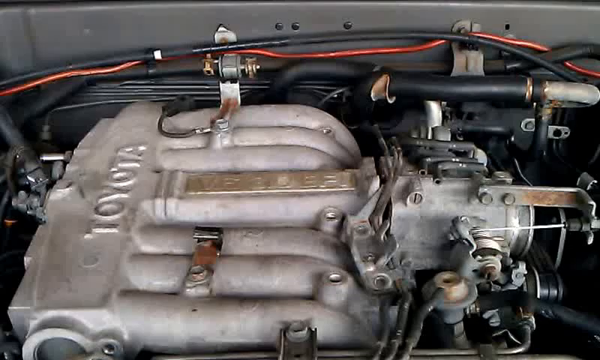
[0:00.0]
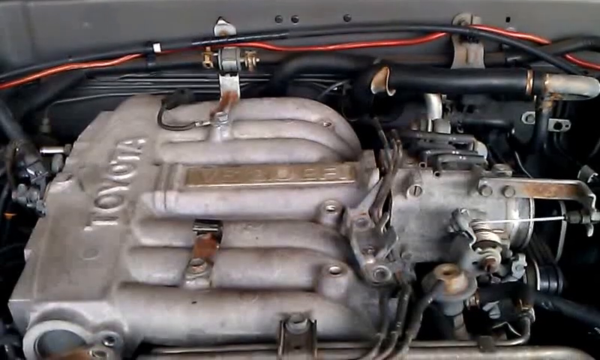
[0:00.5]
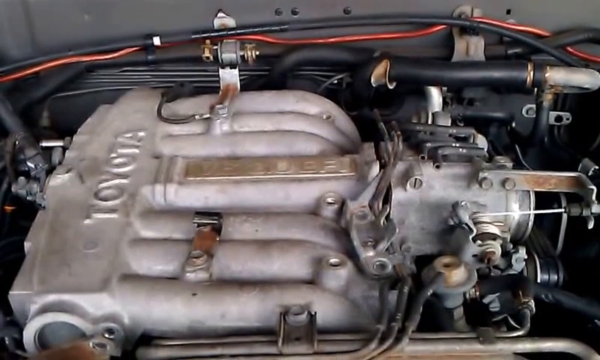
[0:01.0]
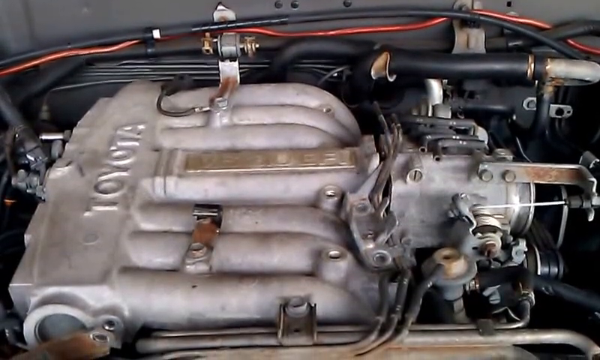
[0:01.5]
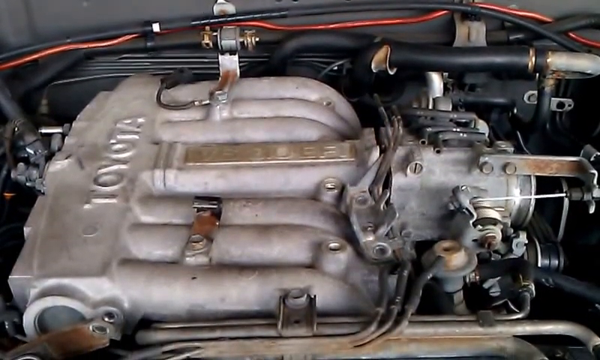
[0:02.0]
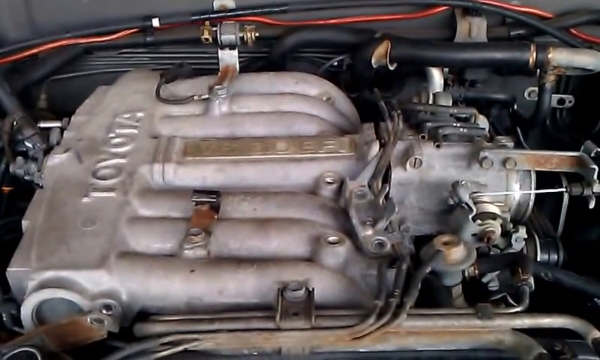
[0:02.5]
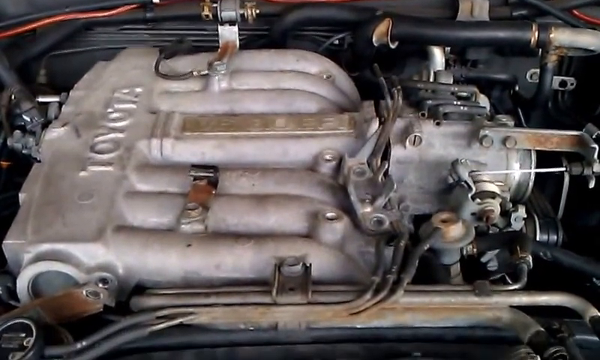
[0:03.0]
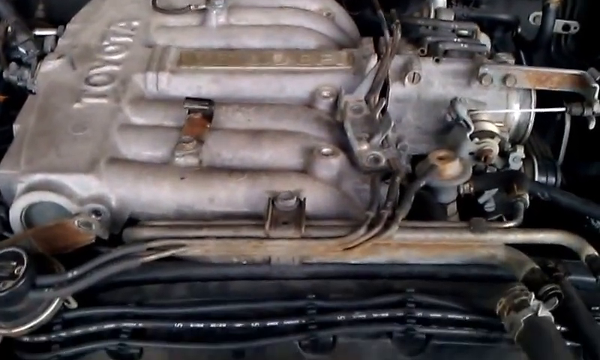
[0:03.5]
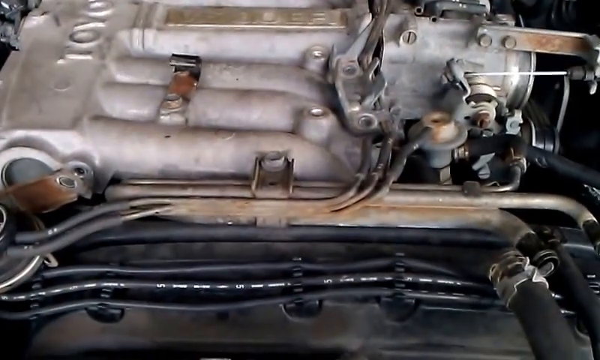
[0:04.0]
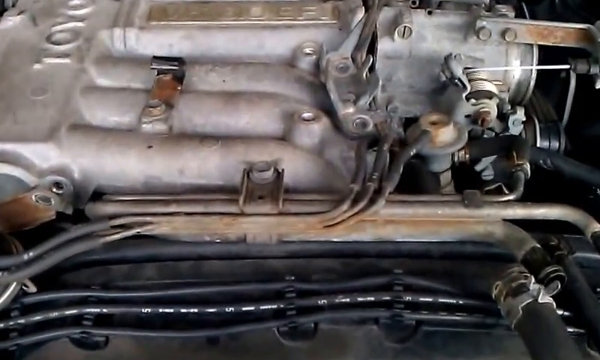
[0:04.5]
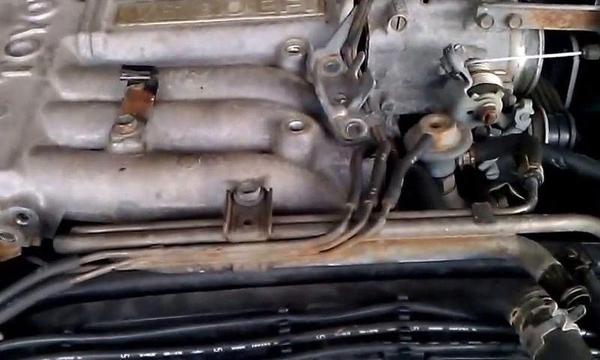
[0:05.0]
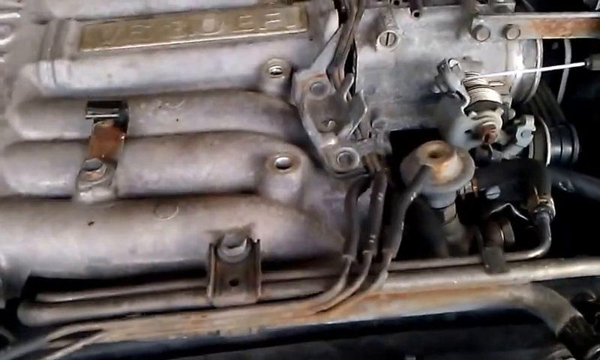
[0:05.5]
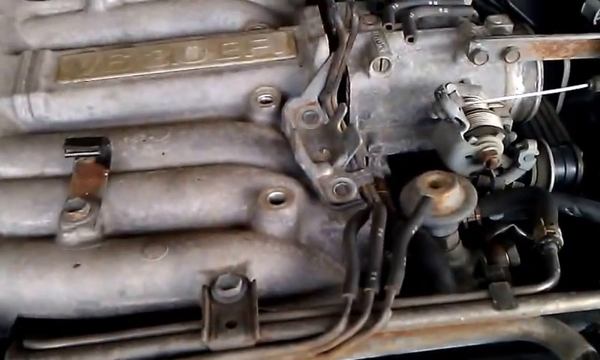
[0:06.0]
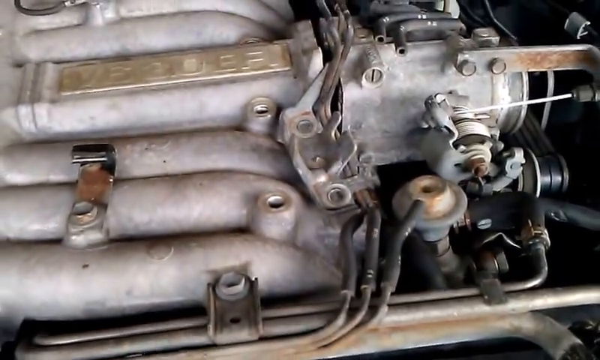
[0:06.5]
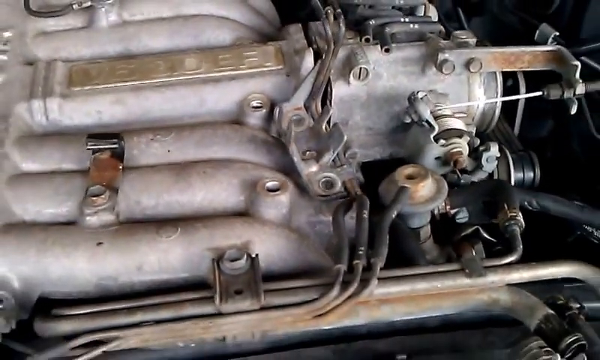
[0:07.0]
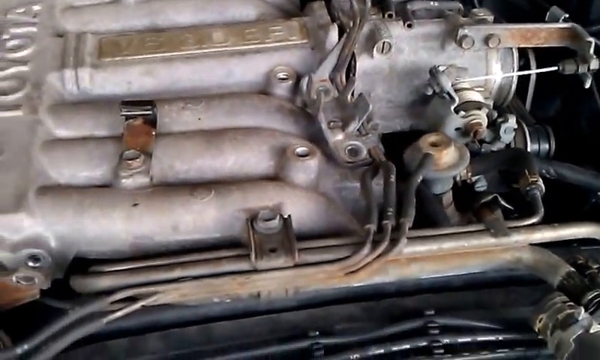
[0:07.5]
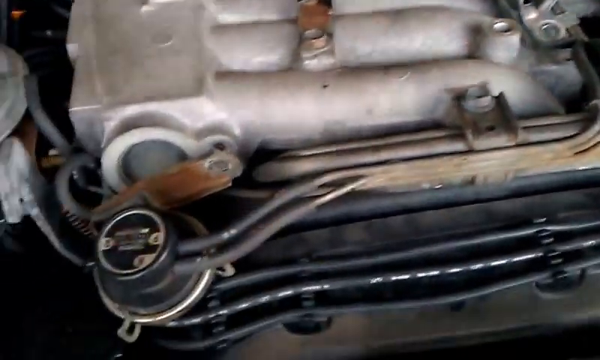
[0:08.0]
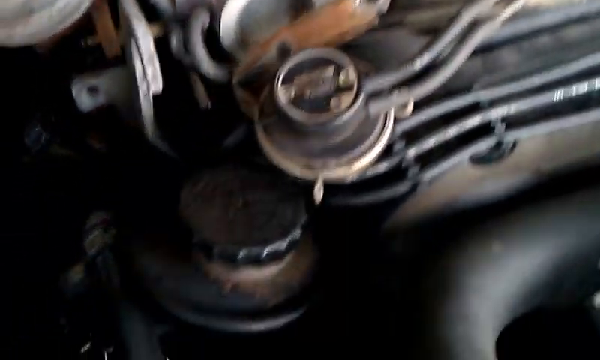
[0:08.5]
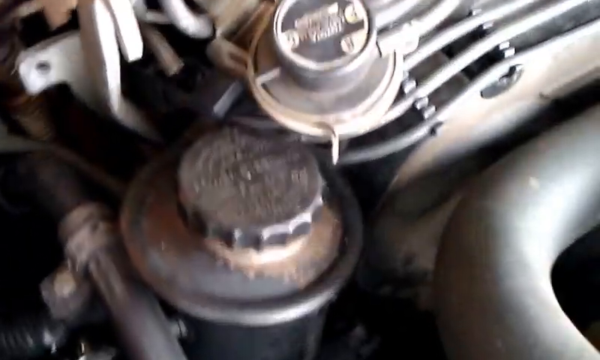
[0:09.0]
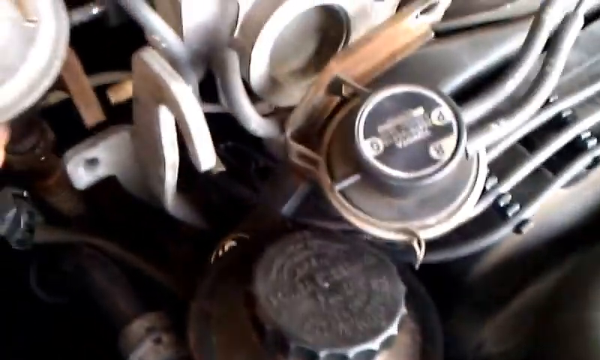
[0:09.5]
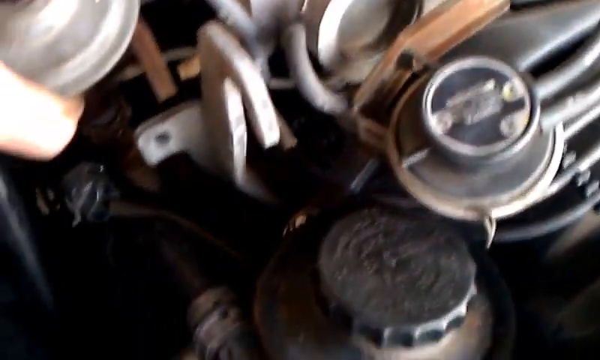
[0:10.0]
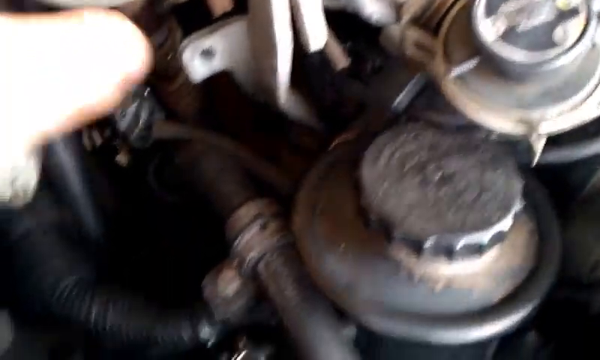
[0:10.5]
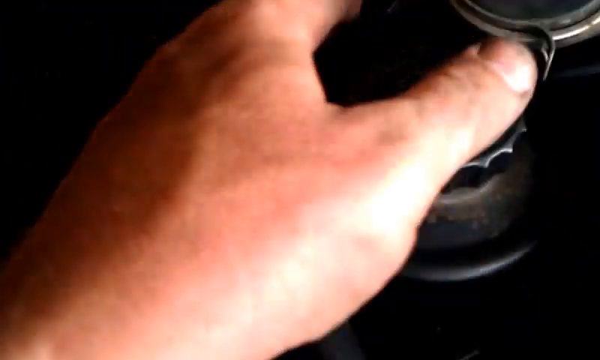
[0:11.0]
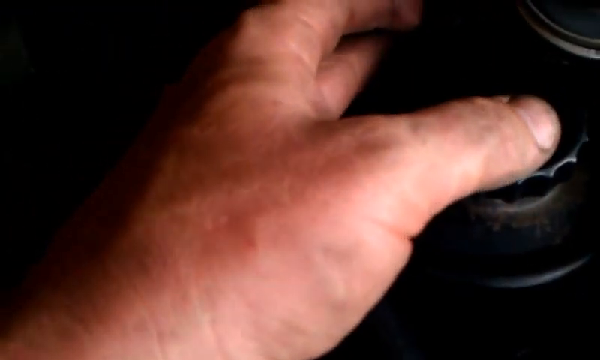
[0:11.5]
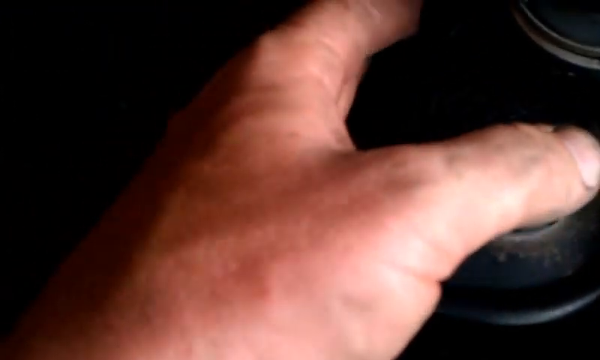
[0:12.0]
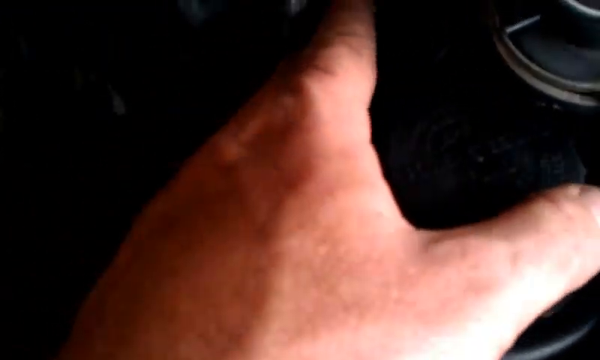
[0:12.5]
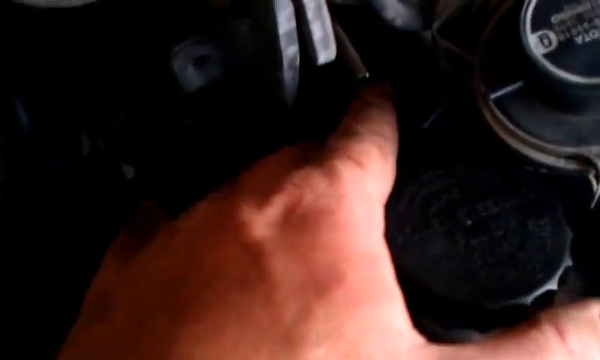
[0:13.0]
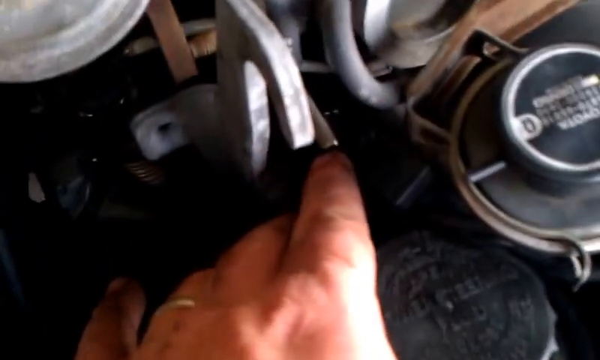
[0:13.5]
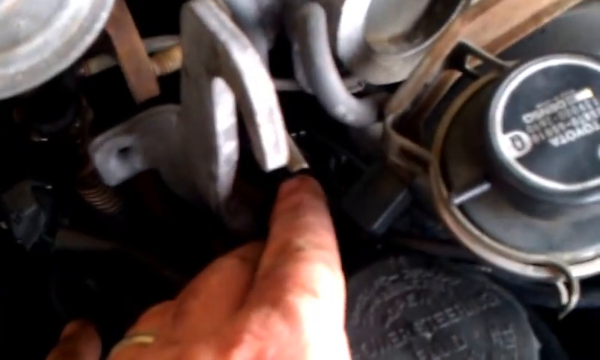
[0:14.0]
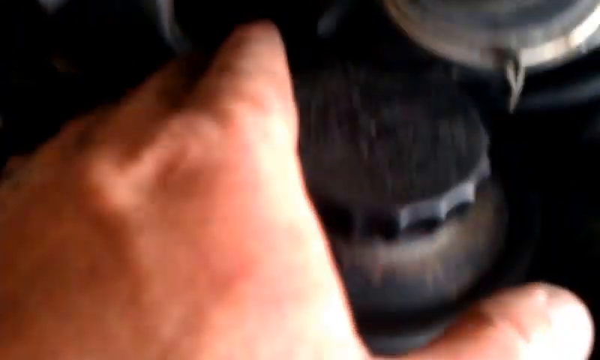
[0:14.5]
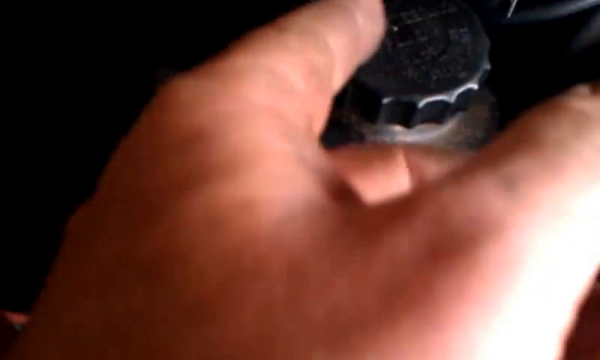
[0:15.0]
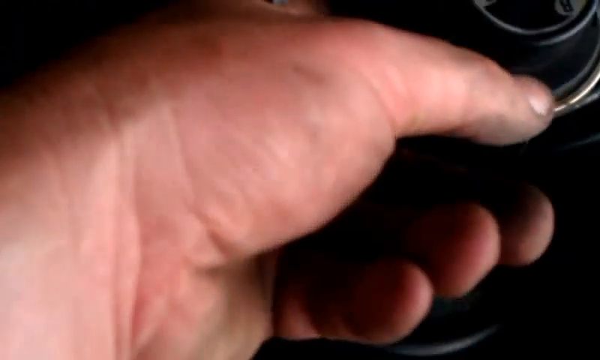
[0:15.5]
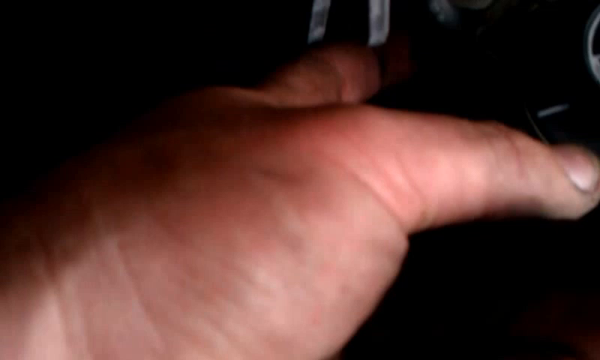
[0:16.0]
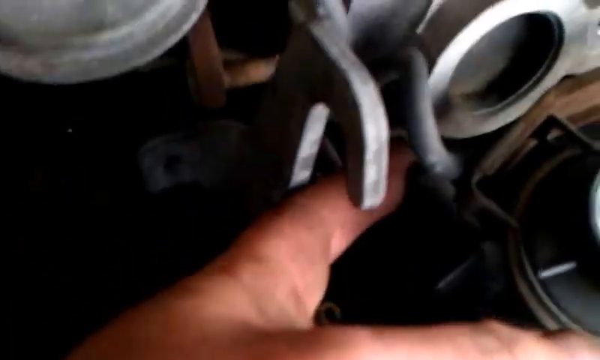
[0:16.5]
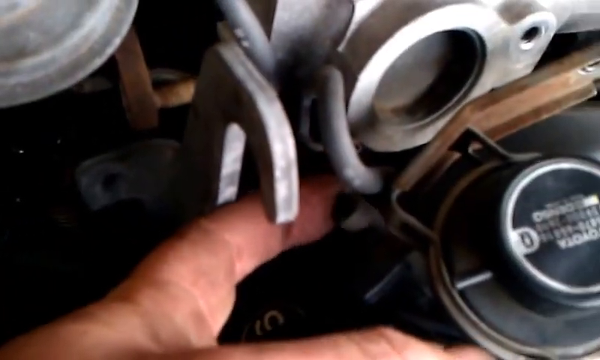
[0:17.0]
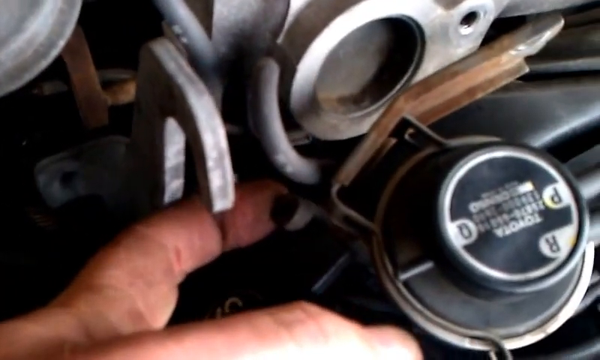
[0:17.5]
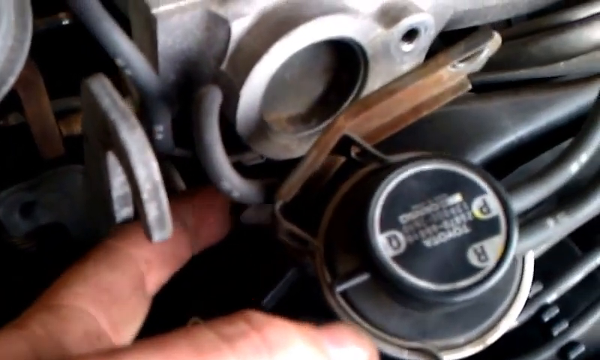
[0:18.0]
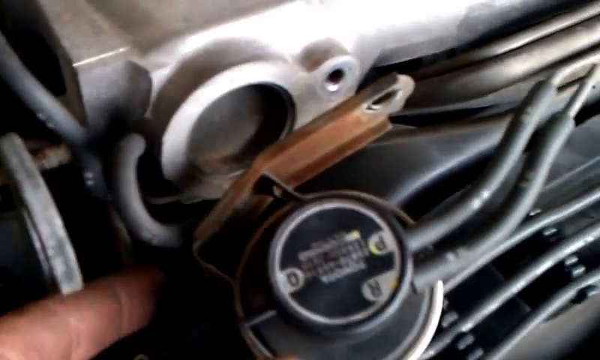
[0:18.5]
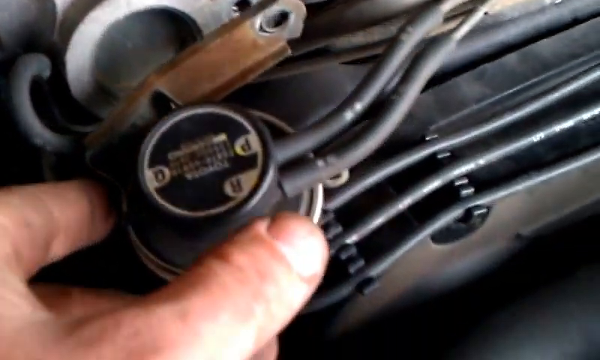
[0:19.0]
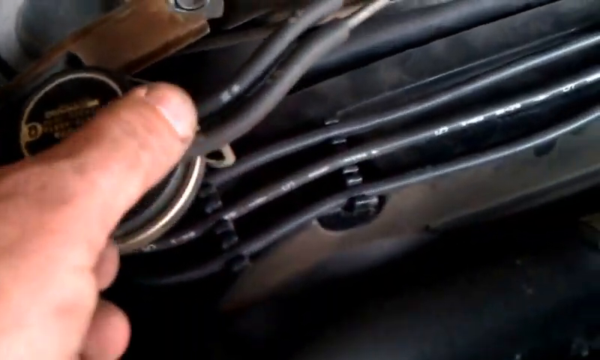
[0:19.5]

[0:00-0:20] The view is under the hood, looking at the engine, with the underside of the hood where it raises up visible. A black wire and a red wire run across there. The engine is in the center. Other wires and hoses, black and colored, run across the back; one is very big and four are smaller. The engine is a grayish metal color, with "Toyota" on the left side, the tops of the letters pointing to the left. Two fan belts are visible on the right side at the edge. The camera slowly pans down until it is just before the radiator. Some wires go across, then the camera moves up a little. Hoses go into three different places, coming down and going to the left. The camera moves into them on the right for a better view, then goes down to the left where the radiator cap is. There is another lid cap for some other part of the car, apparently for some sort of fluid to be poured into. The person jiggles the one next to the radiator, which is kind of under the radiator and is leaning to the right. They work on it for a minute and reach in with their left hand. There is a little knob on the back of the radiator, and they move it. They grab hold of the radiator cap with their left hand and move it up and down. The shot is close in on the hand, showing the knuckles a little, the back of the hand, and the fingers and thumb.